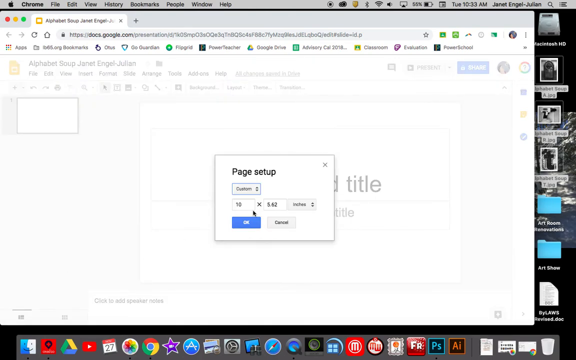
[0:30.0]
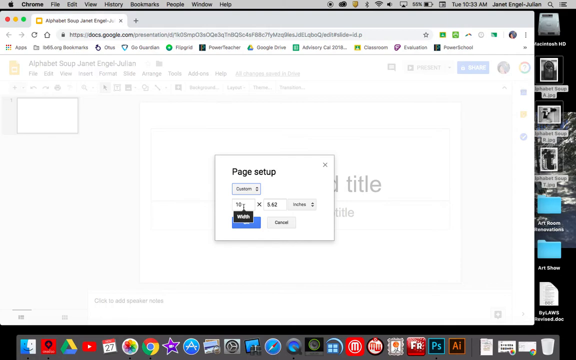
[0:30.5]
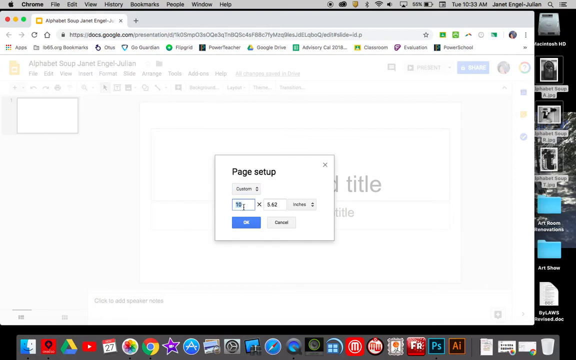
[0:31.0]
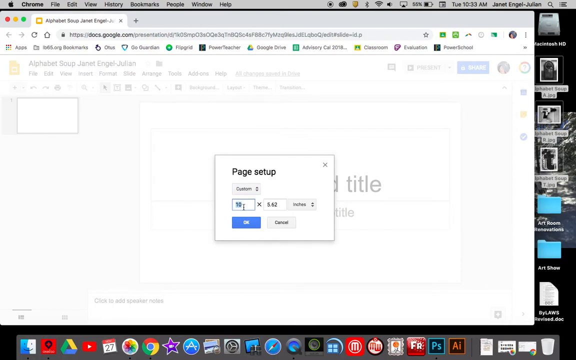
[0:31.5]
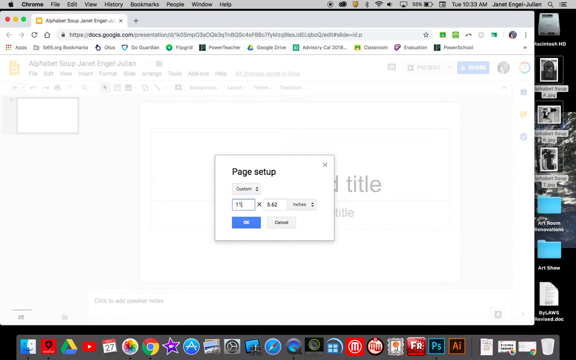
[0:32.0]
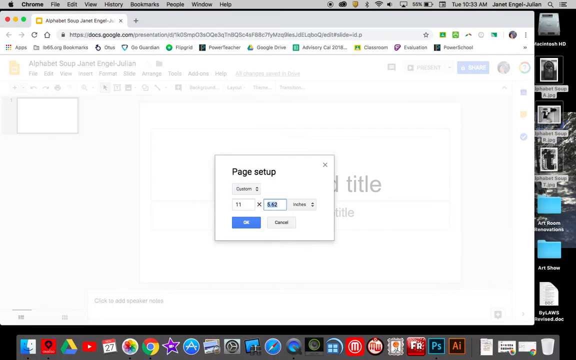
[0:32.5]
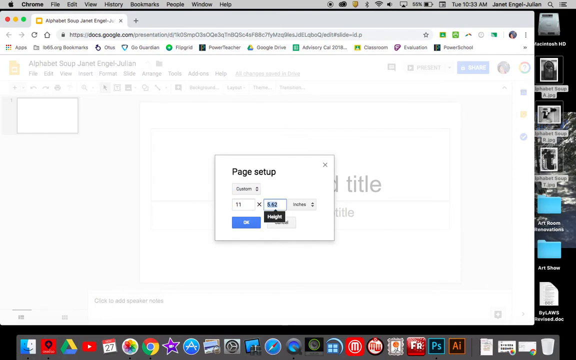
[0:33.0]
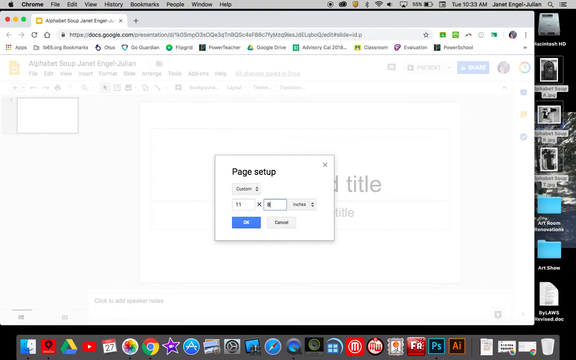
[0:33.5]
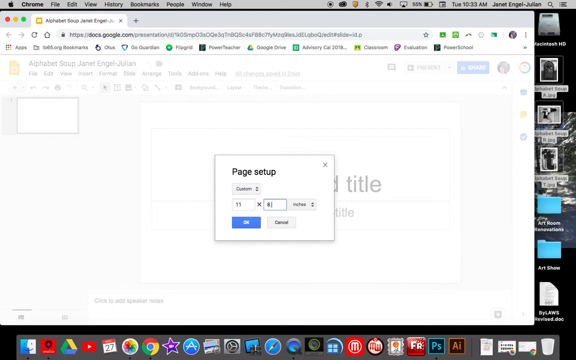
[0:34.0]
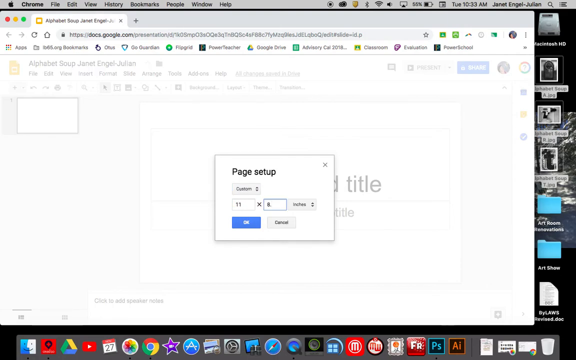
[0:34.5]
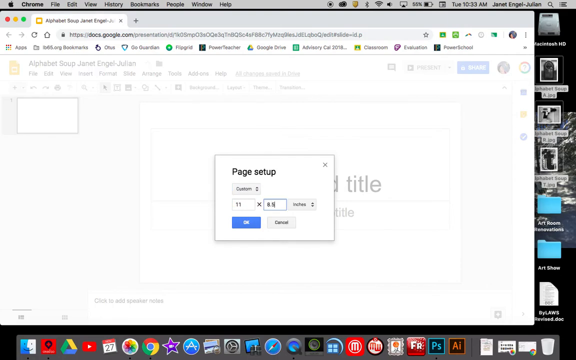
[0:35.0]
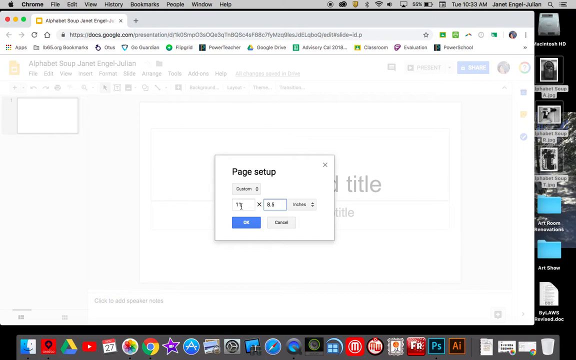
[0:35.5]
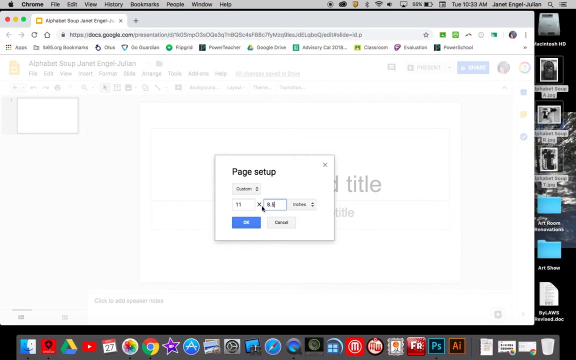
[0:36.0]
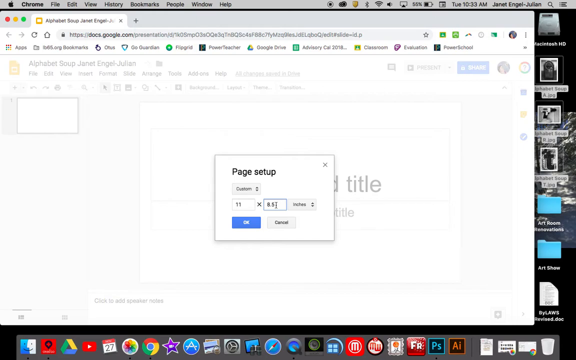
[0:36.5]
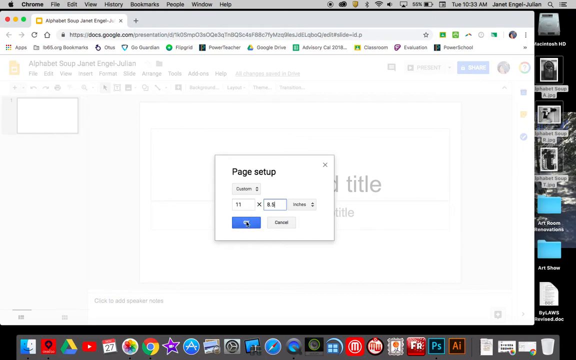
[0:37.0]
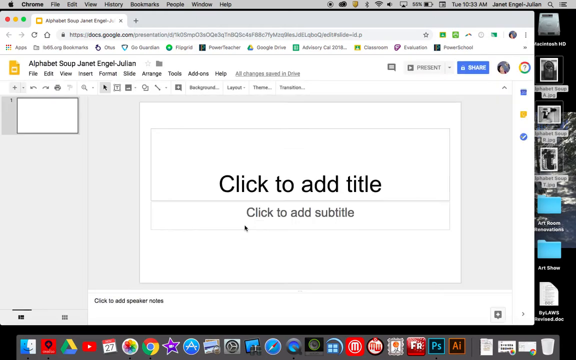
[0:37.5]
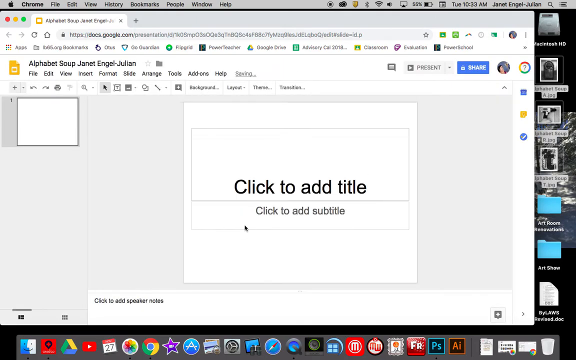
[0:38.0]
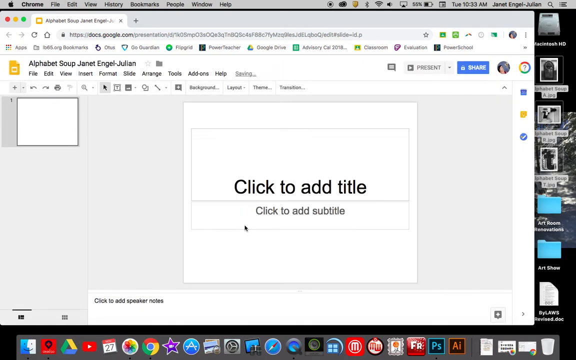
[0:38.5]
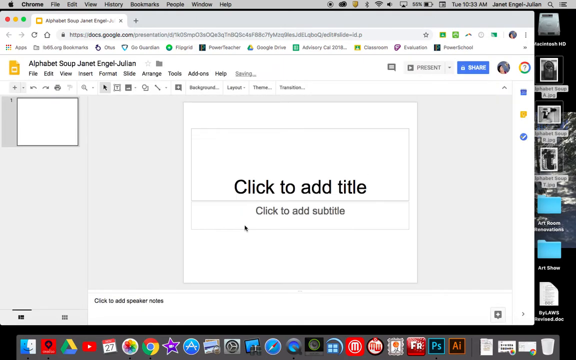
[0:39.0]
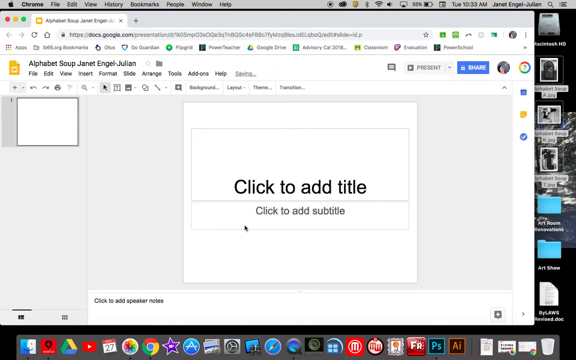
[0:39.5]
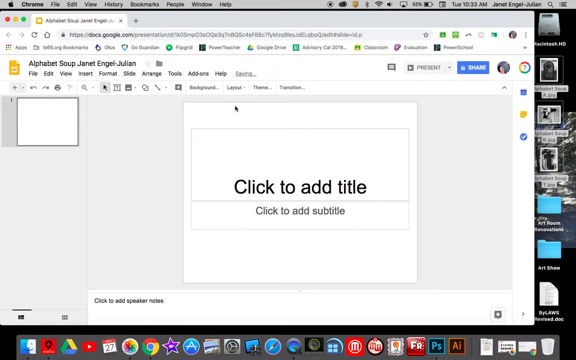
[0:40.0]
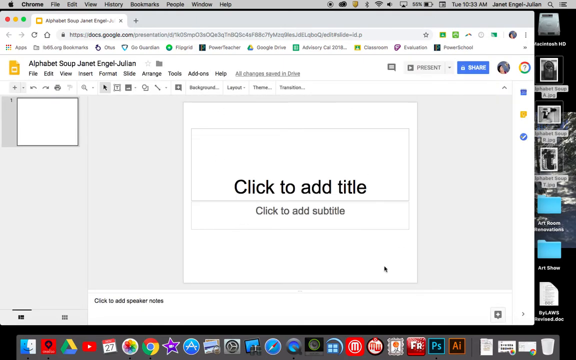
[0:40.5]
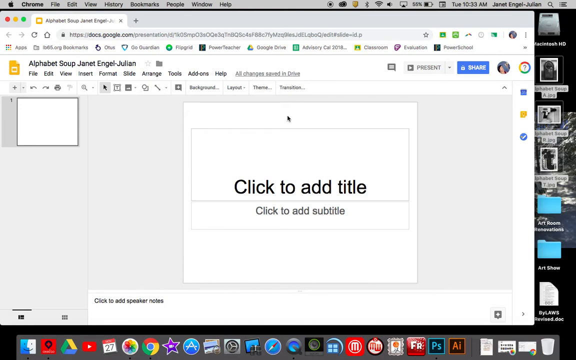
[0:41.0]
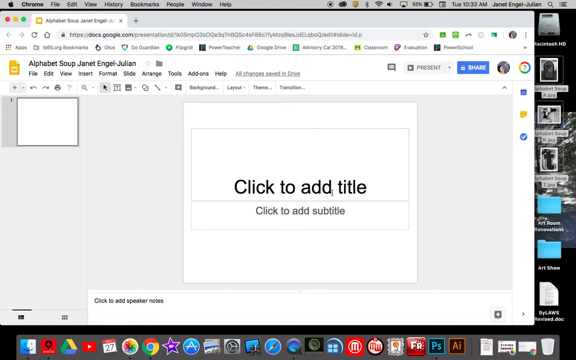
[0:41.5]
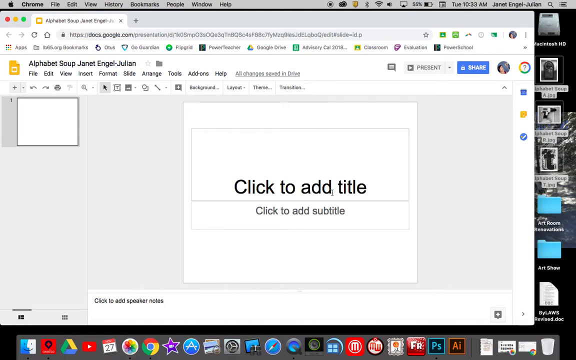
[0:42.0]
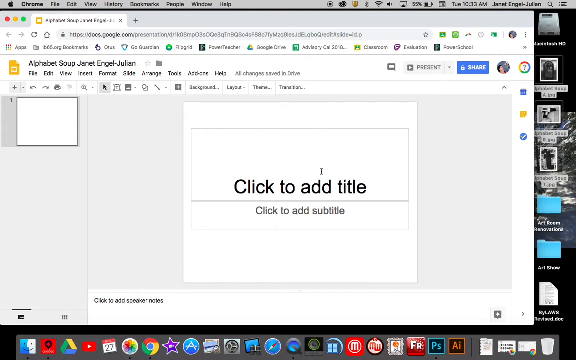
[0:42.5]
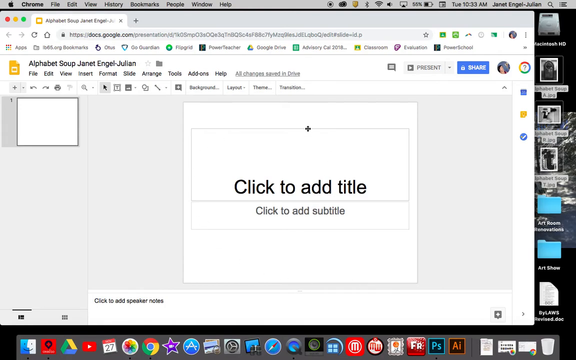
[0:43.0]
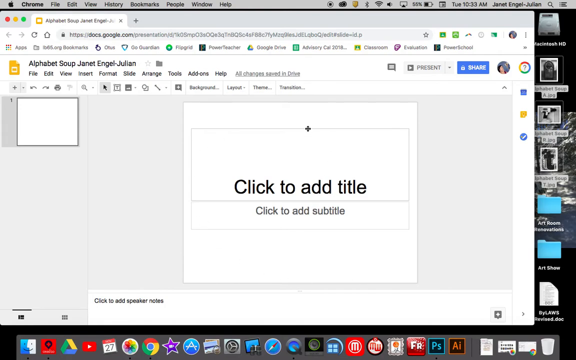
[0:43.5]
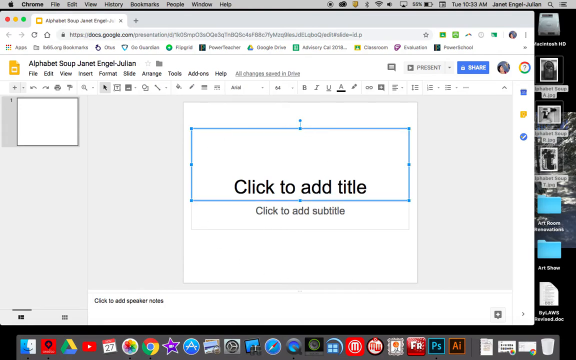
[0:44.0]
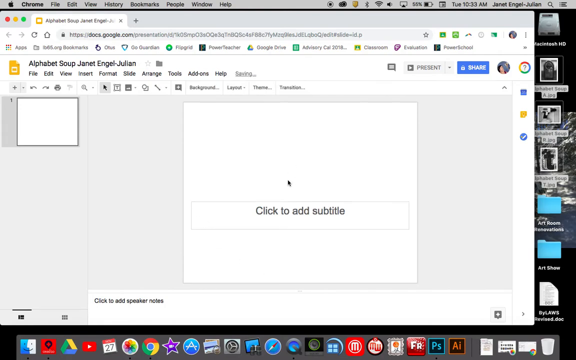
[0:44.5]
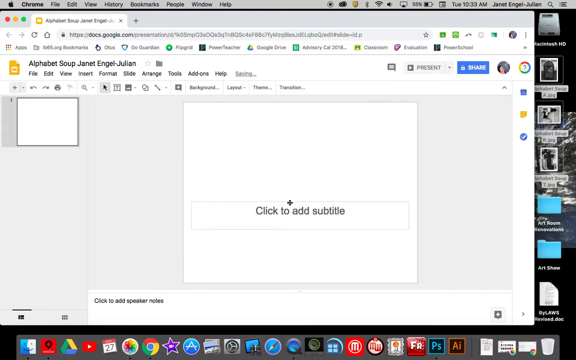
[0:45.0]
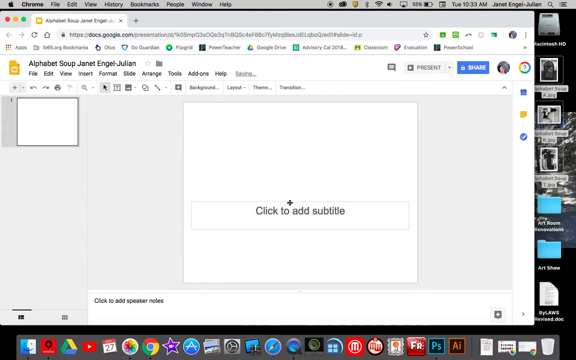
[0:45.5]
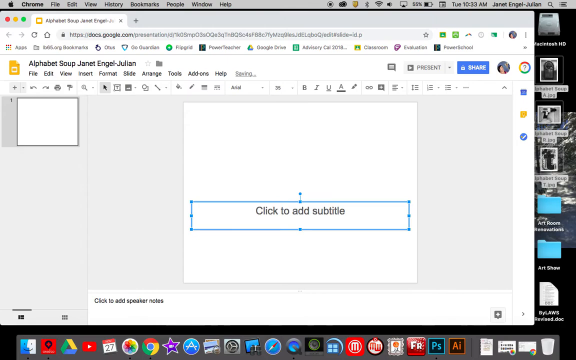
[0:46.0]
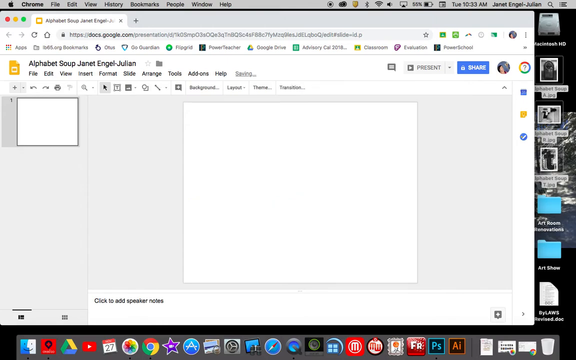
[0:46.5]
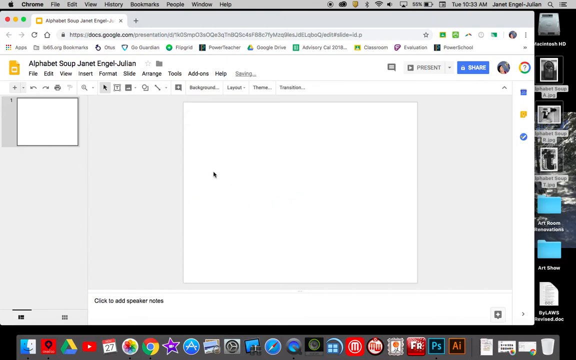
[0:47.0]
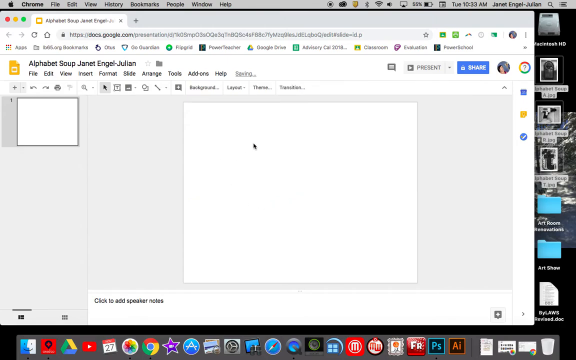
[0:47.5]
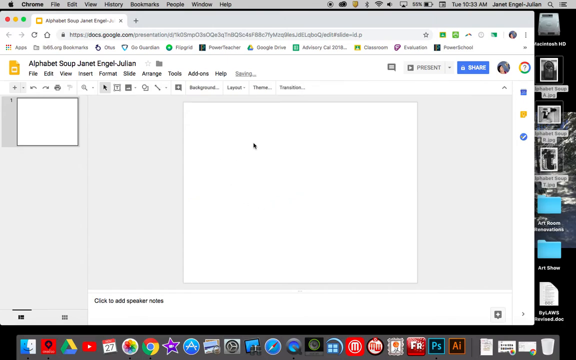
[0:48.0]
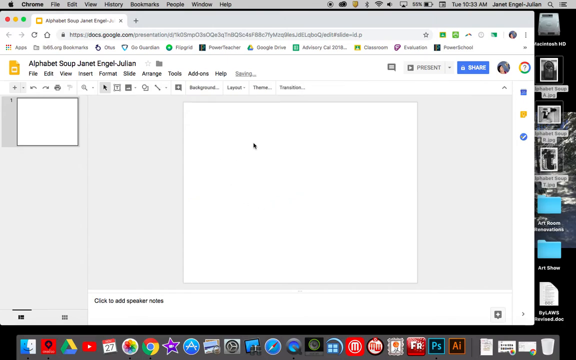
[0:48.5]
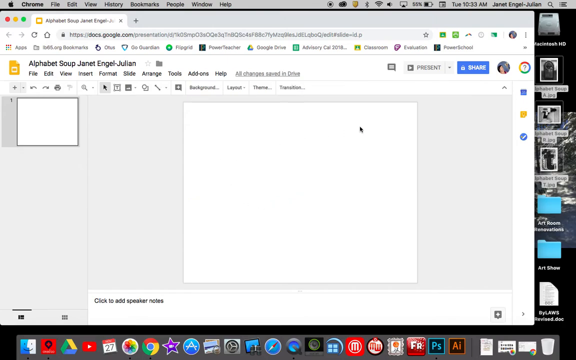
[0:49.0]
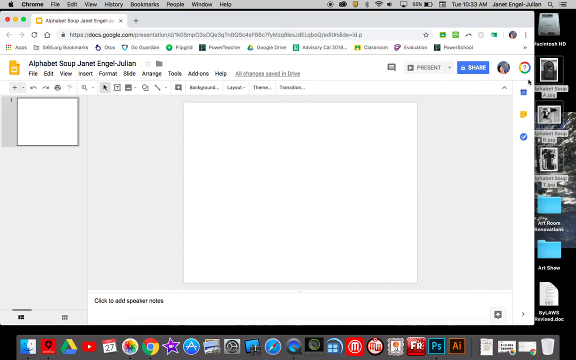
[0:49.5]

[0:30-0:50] A Windows Chrome browser on an Apple computer shows the white Google Docs sheet, with a small box titled "Page Setup" in the middle of the screen showing custom pixels. The user adjusts the width, then the height, and clicks OK. The "click to add title" and "click to add subtitle" text shrinks slightly. The user makes a circle motion with the mouse, moves it up, clicks on the title text box and then the subtitle text box, and removes both boxes of text. The mouse then moves right, off the browser, where the desktop background shows on the right side of the screen, and hovers over a black and white image with a white label reading "Alphabet Setup A". The image has a white frame, is black and white and circular, but it is hard to tell what it shows.